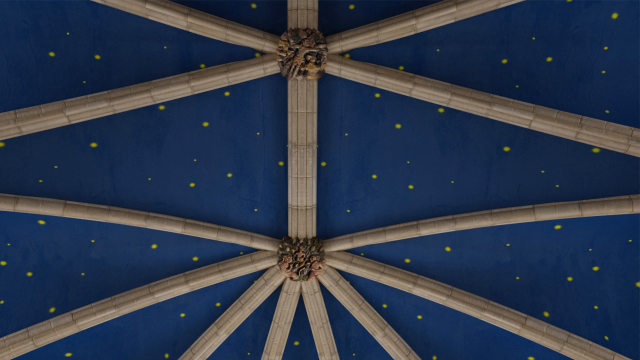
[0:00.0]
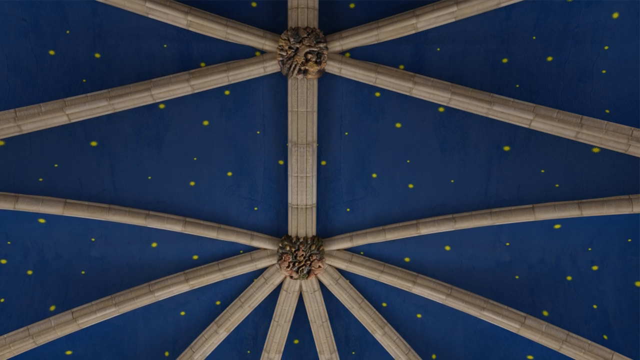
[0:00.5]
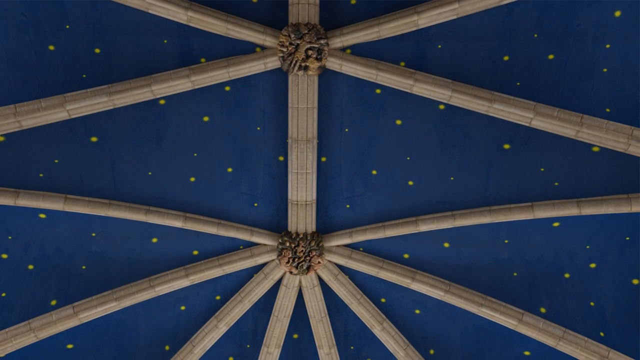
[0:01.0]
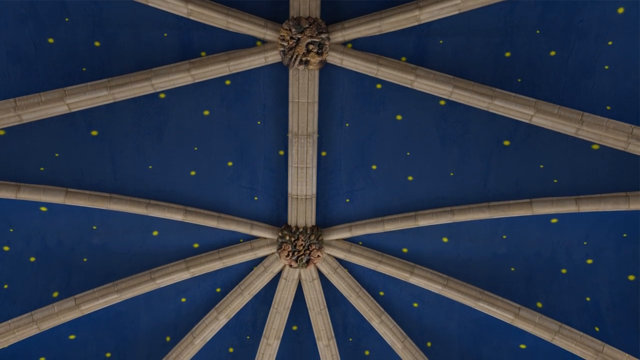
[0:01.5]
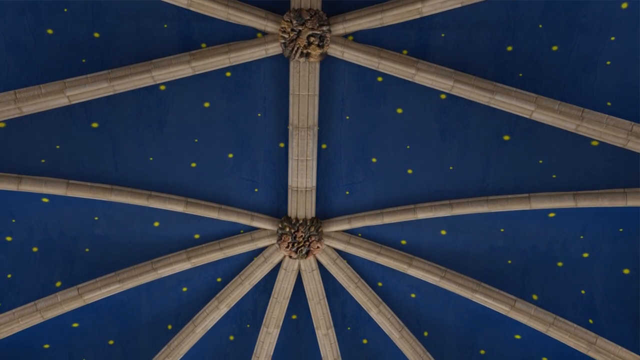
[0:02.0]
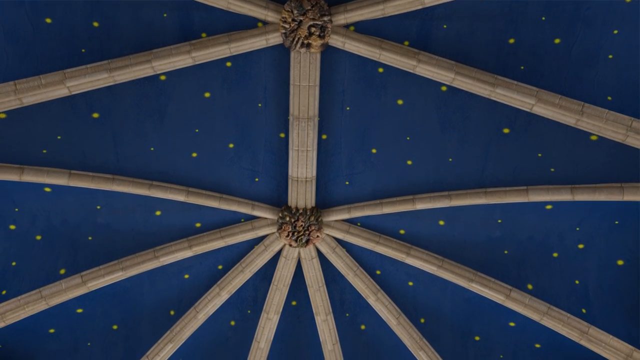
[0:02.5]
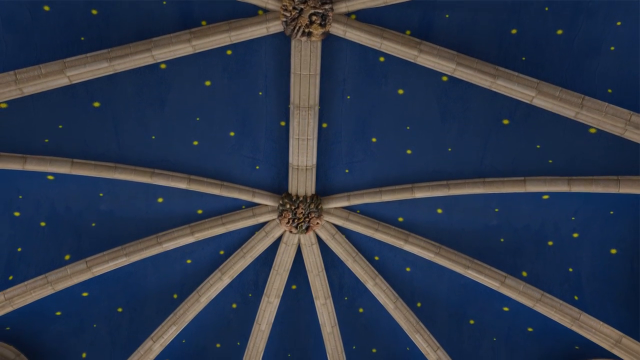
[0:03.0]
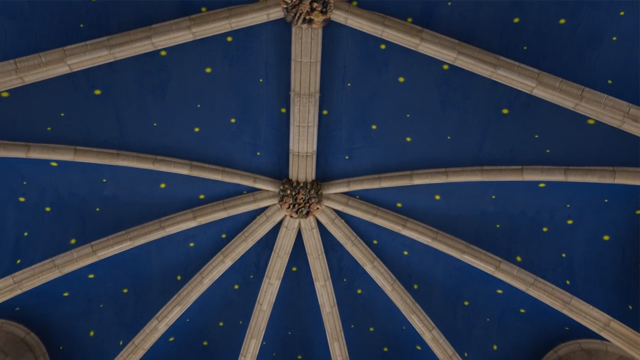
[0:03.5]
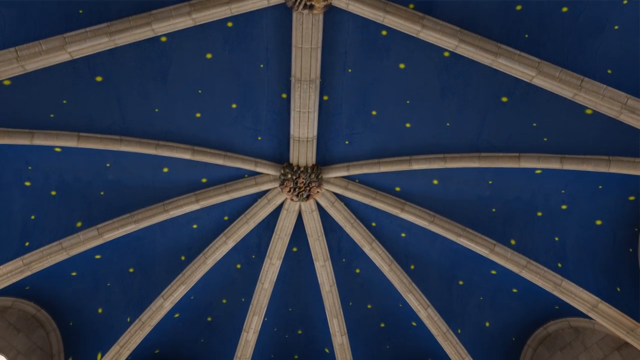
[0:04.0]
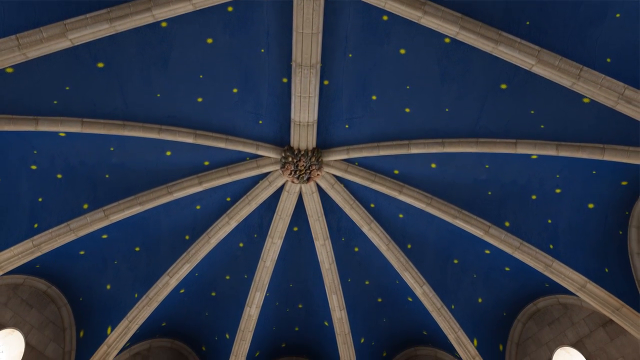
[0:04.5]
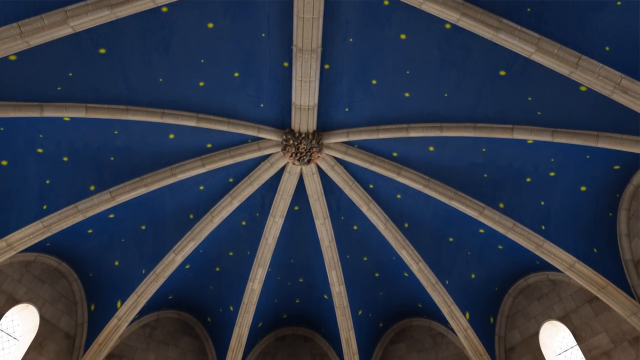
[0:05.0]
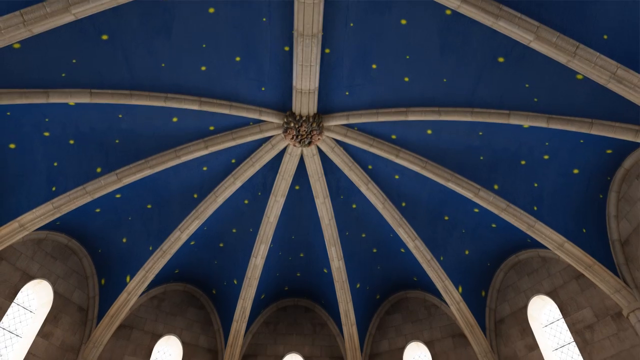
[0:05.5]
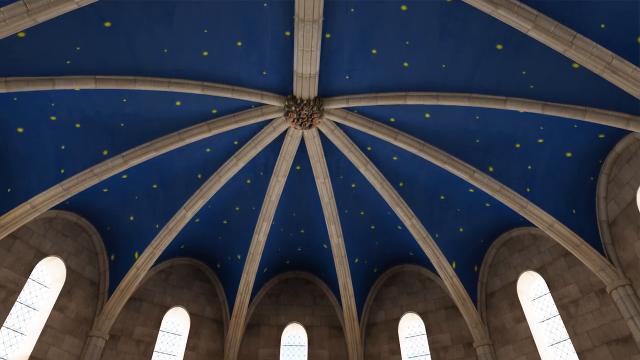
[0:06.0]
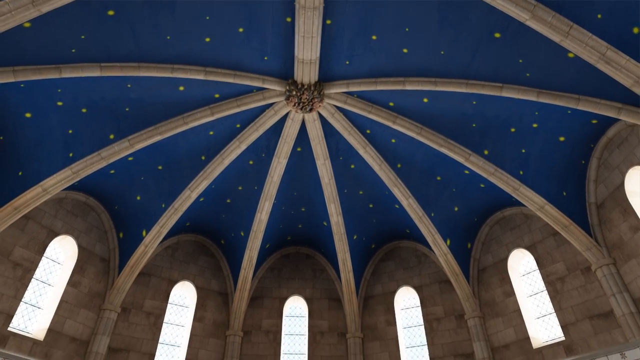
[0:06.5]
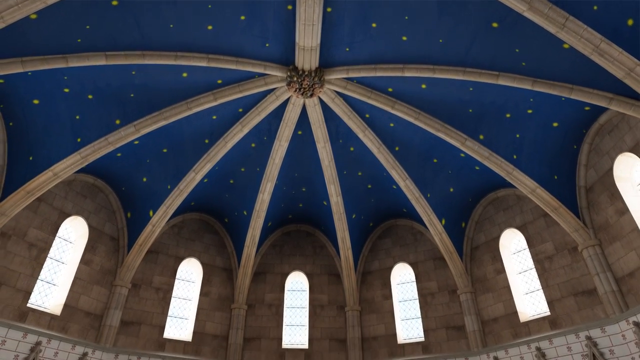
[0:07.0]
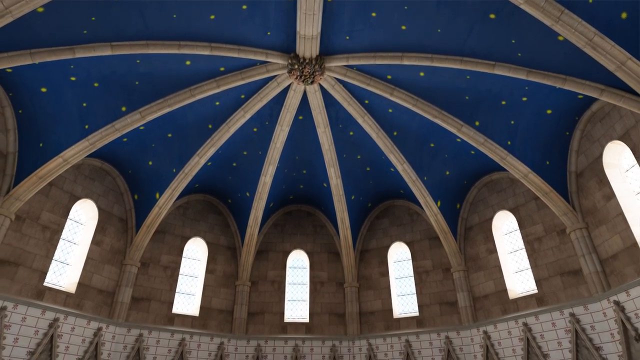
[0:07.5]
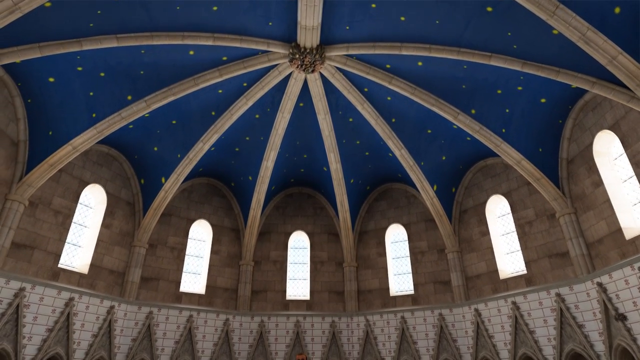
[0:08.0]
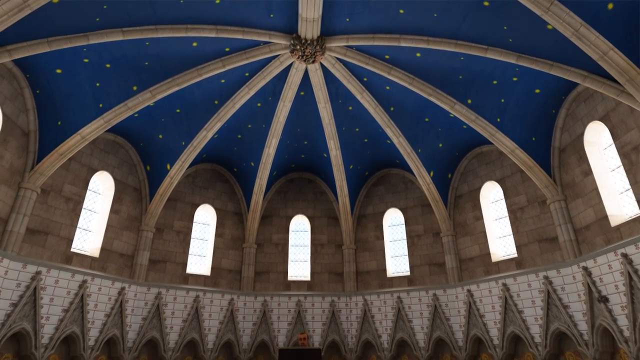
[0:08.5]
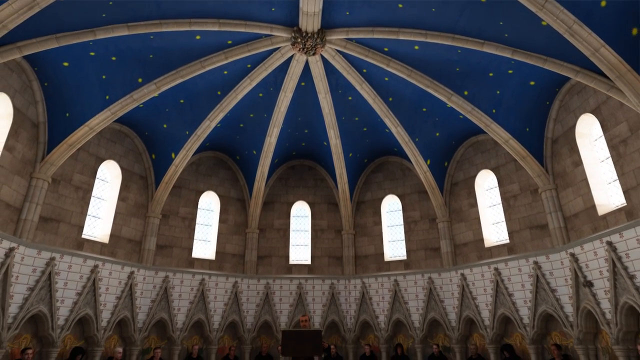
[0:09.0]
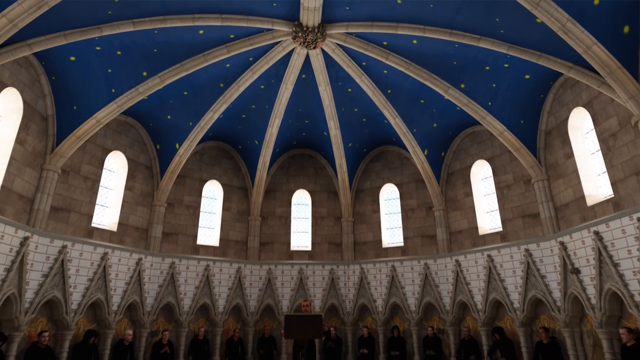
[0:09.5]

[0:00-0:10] The video looks up at a dark blue ceiling with yellow spots that make it look like a night sky, broken up by raised concrete parts. In the very middle is an ornate circular stone piece, with ornate concrete, almost like vines, coming out of it so the ceiling looks like segments of an orange, with the blue and yellow spots between them. The camera pans down, revealing that the building is circular and dome-shaped, with lots of archways containing arched windows around the side.